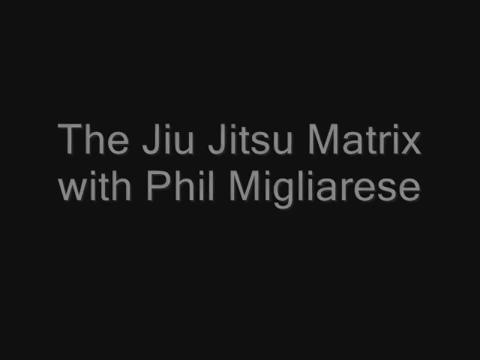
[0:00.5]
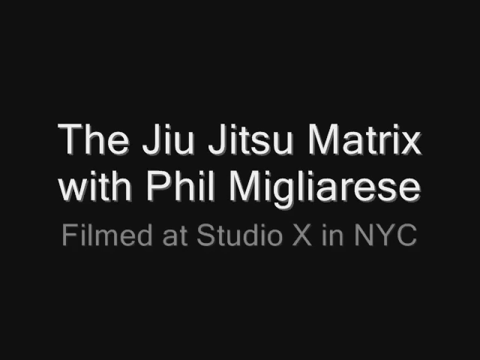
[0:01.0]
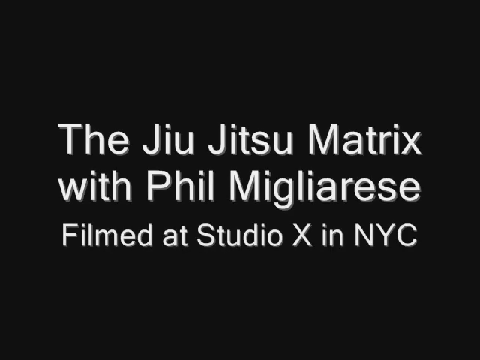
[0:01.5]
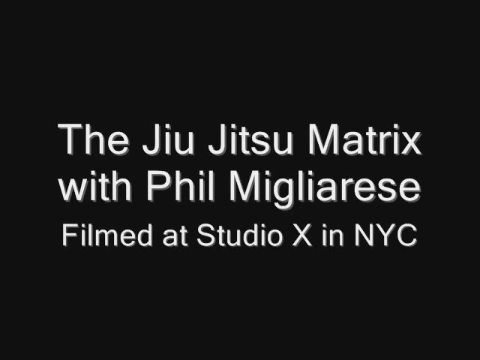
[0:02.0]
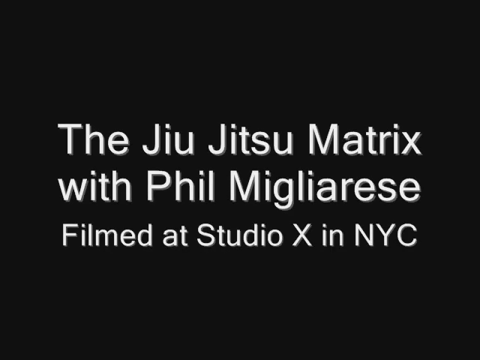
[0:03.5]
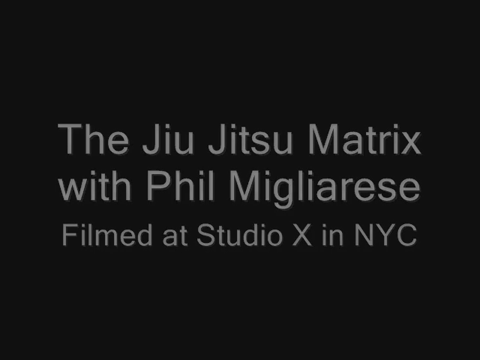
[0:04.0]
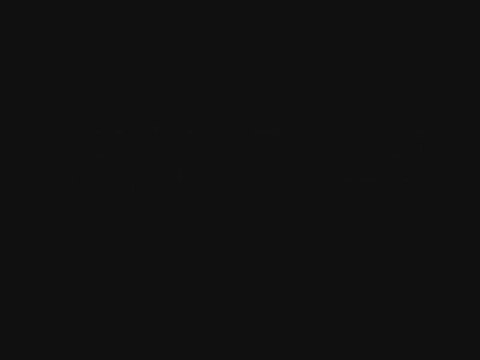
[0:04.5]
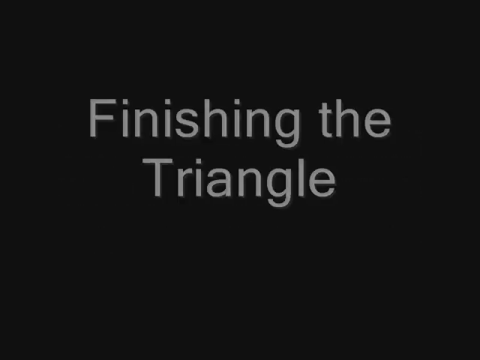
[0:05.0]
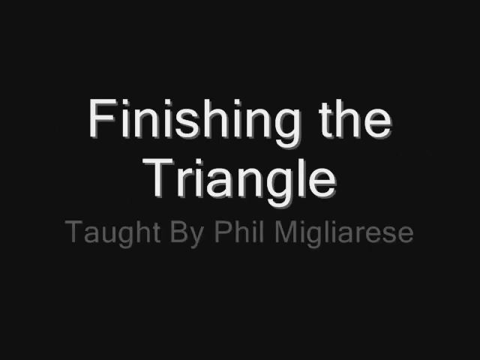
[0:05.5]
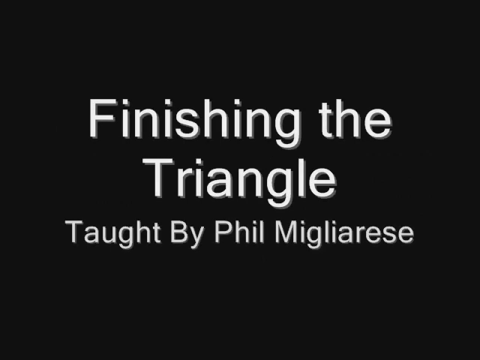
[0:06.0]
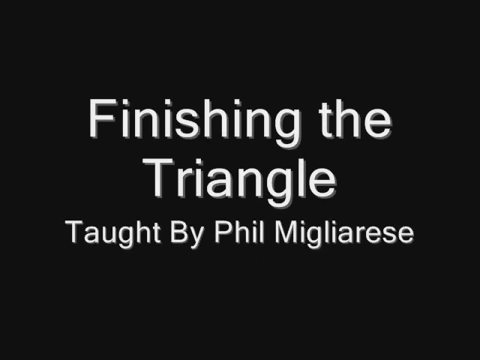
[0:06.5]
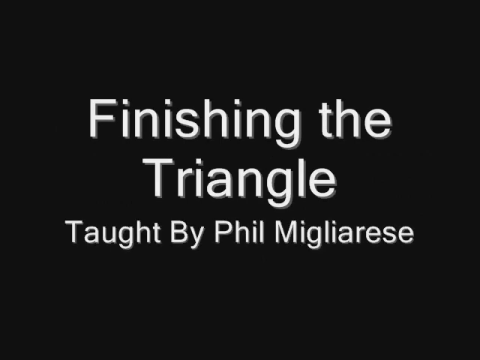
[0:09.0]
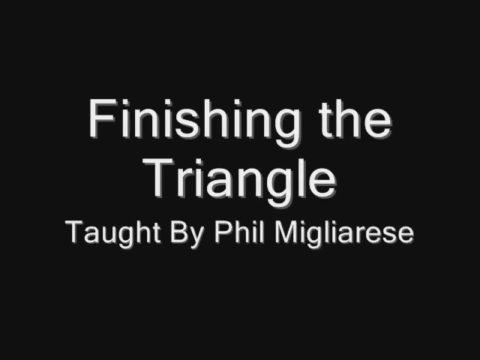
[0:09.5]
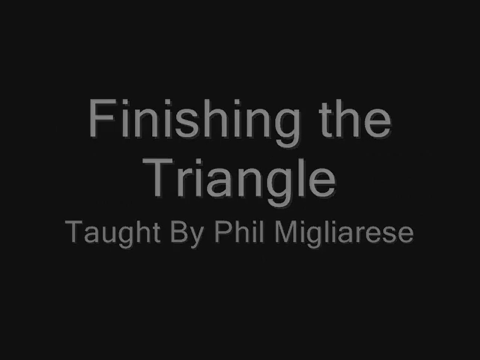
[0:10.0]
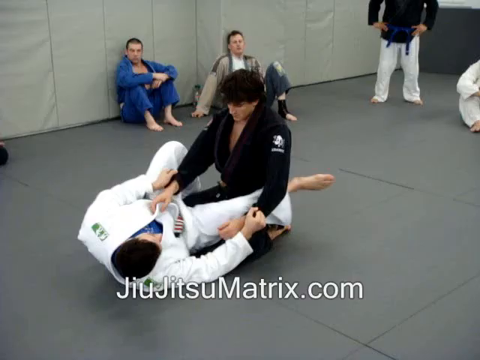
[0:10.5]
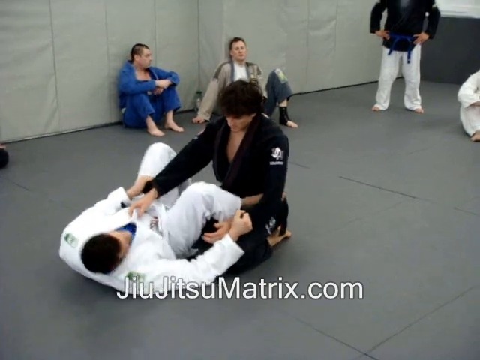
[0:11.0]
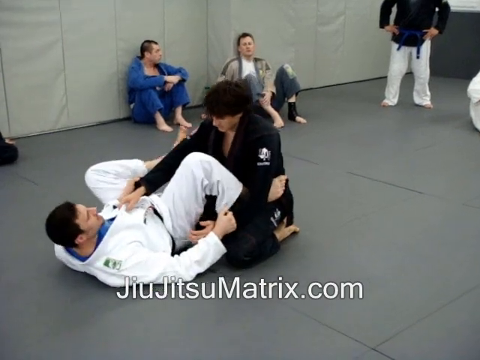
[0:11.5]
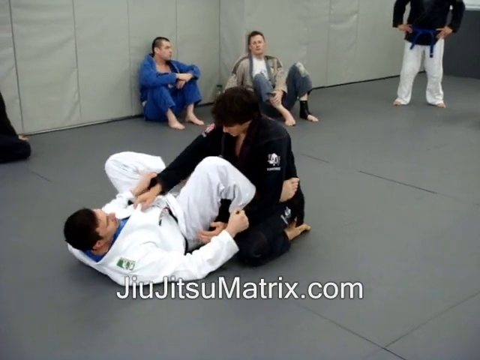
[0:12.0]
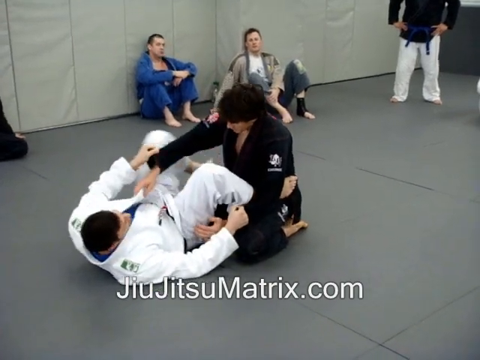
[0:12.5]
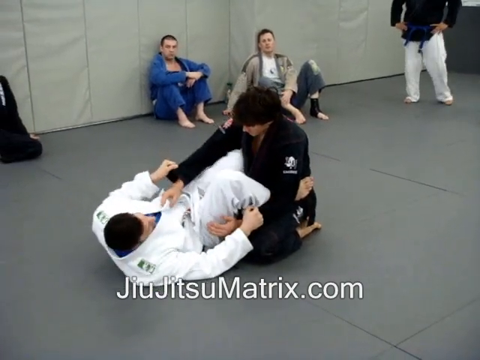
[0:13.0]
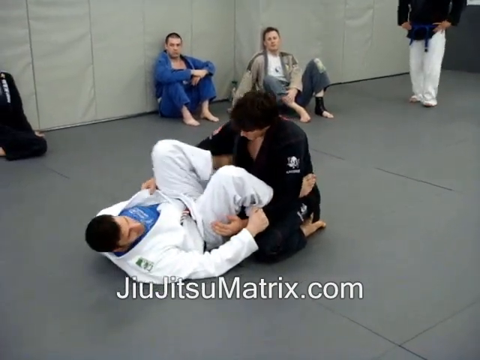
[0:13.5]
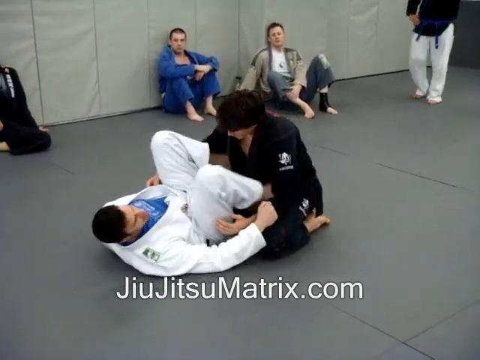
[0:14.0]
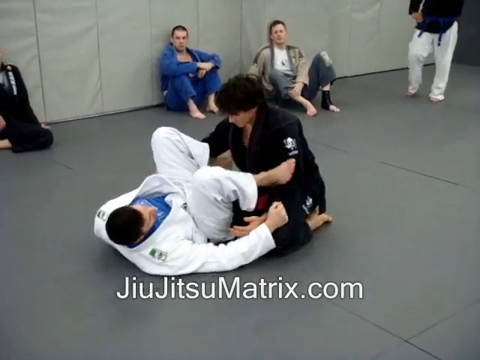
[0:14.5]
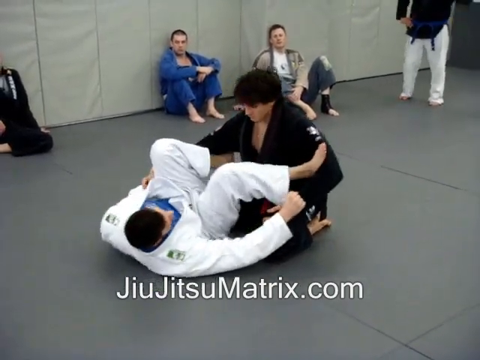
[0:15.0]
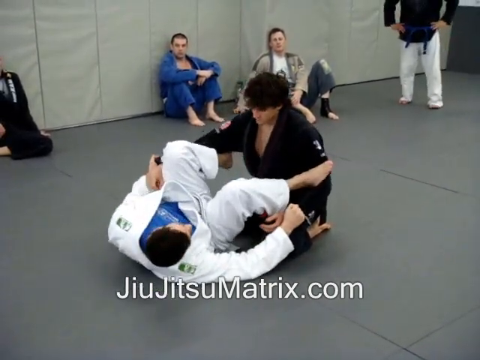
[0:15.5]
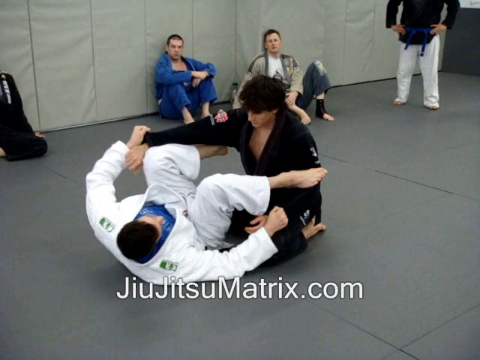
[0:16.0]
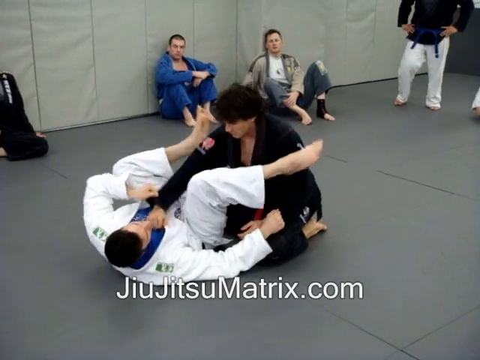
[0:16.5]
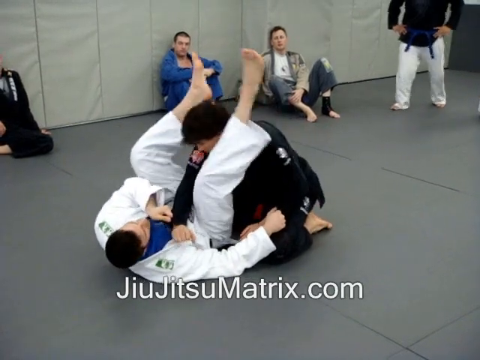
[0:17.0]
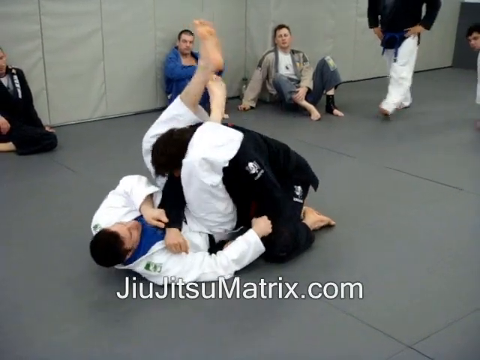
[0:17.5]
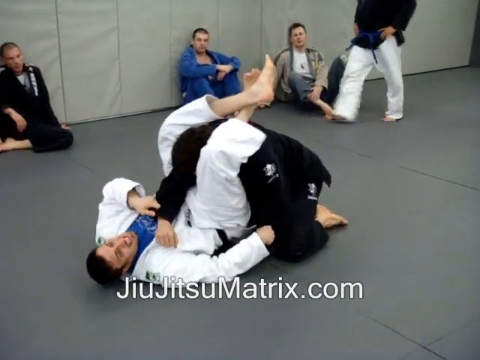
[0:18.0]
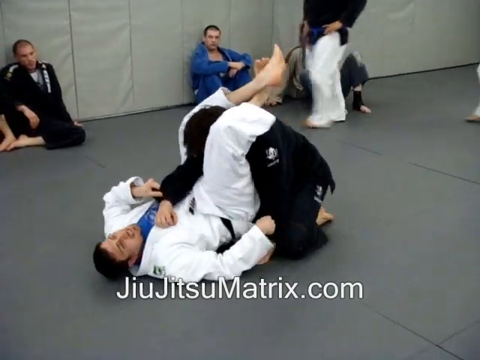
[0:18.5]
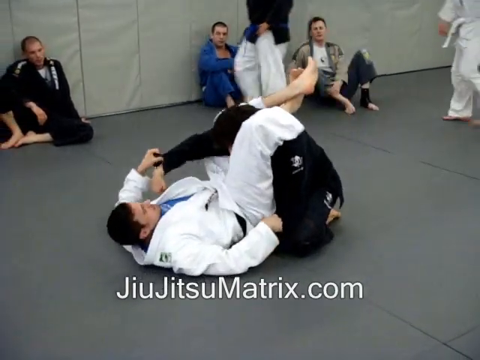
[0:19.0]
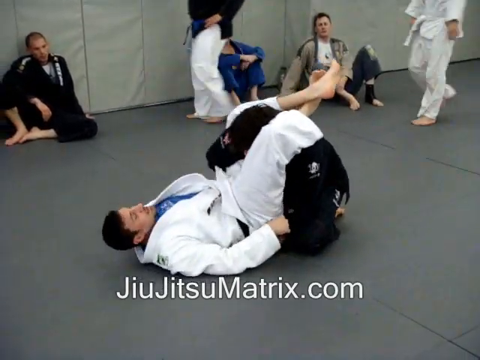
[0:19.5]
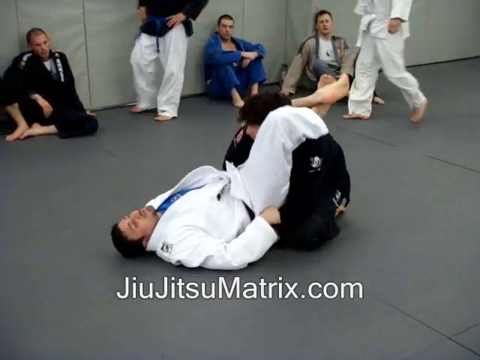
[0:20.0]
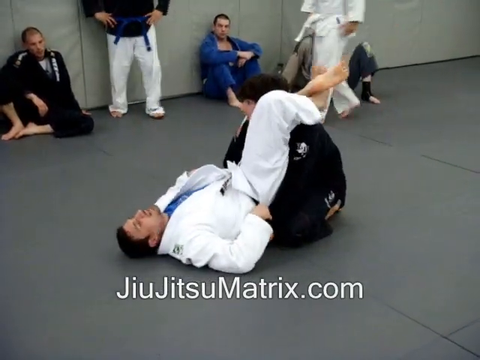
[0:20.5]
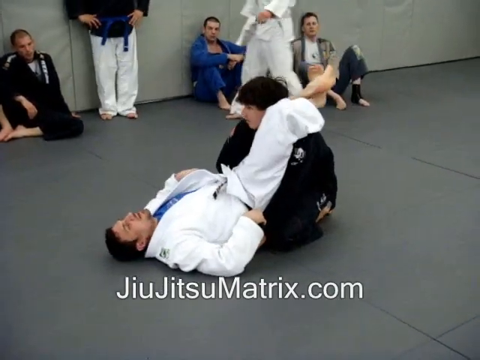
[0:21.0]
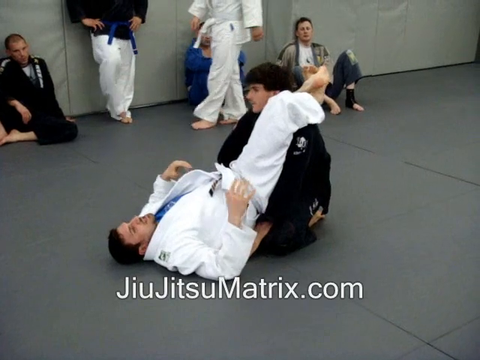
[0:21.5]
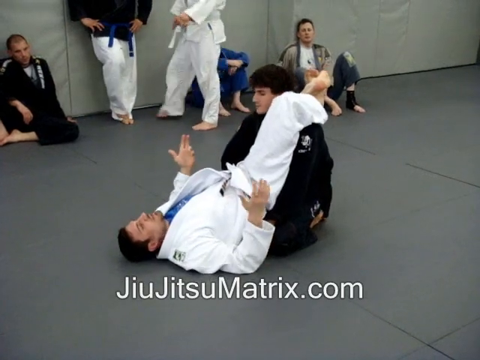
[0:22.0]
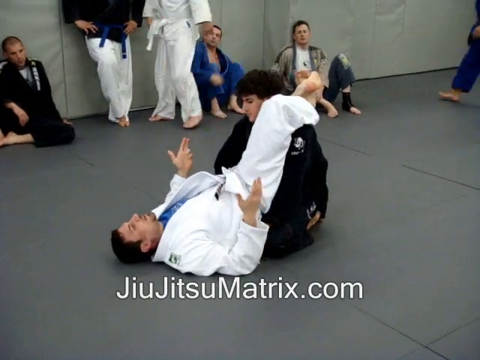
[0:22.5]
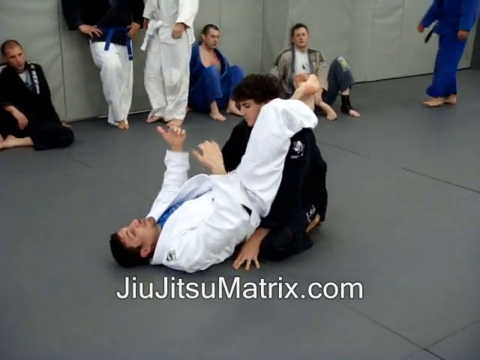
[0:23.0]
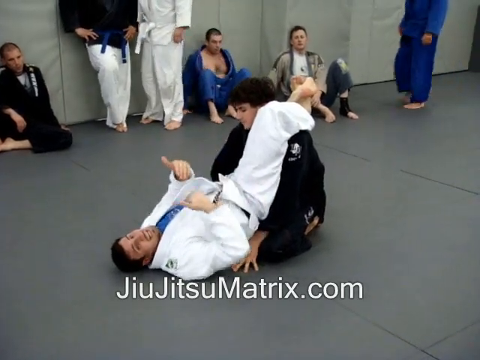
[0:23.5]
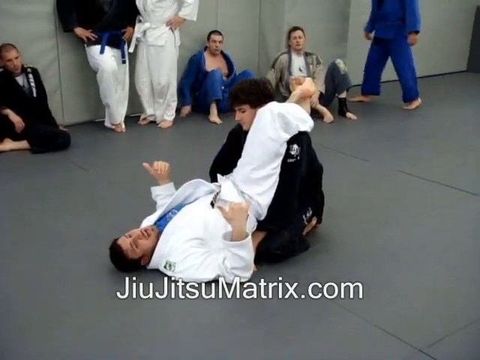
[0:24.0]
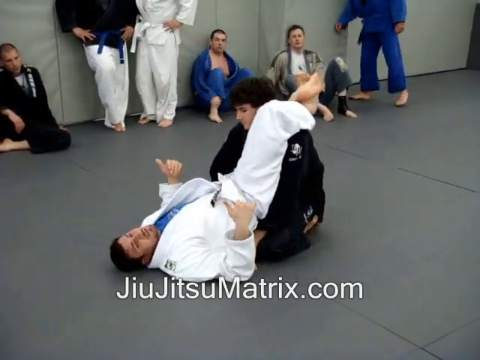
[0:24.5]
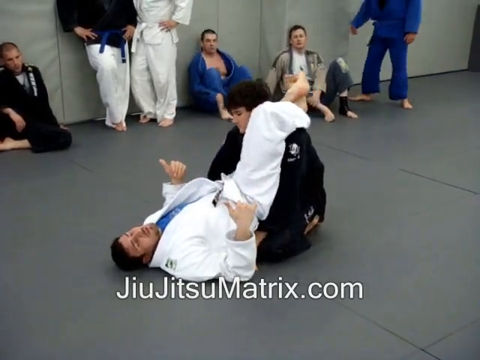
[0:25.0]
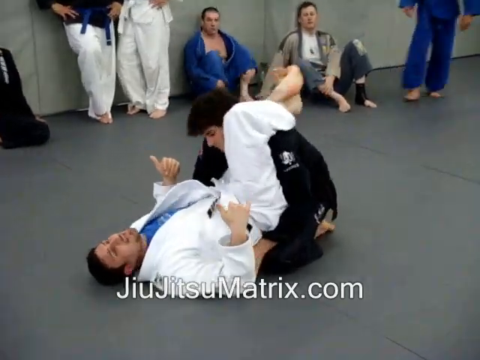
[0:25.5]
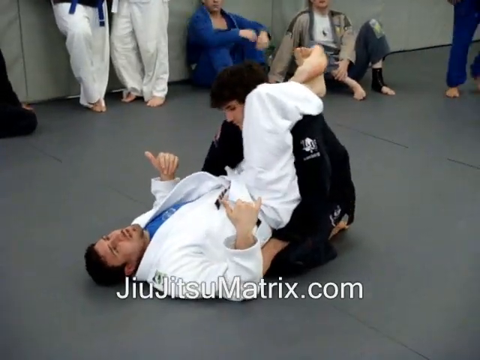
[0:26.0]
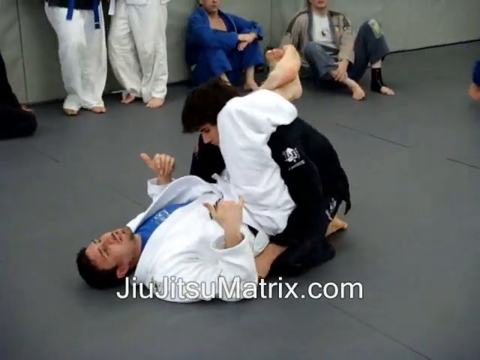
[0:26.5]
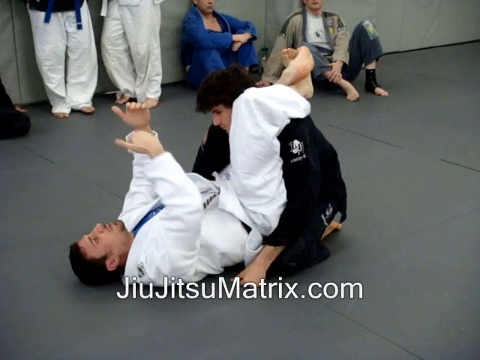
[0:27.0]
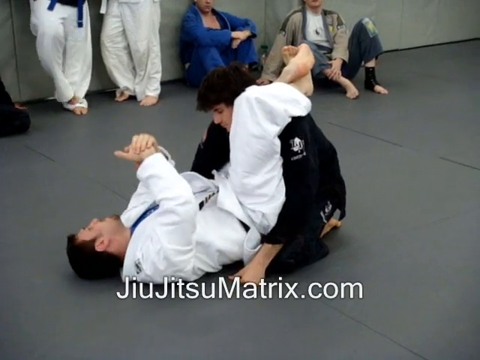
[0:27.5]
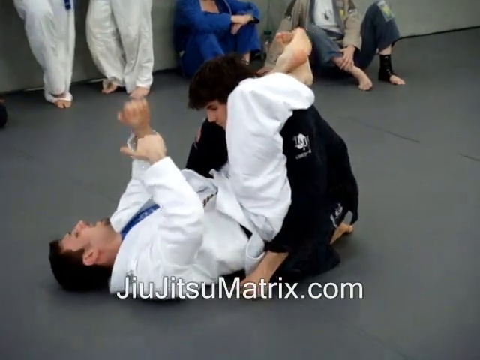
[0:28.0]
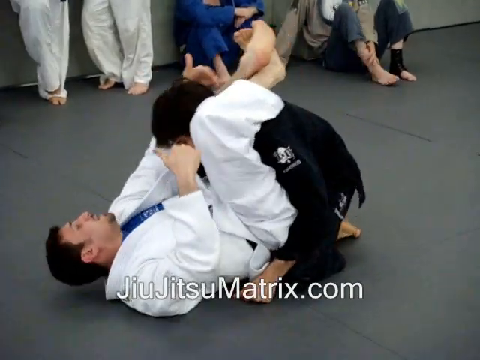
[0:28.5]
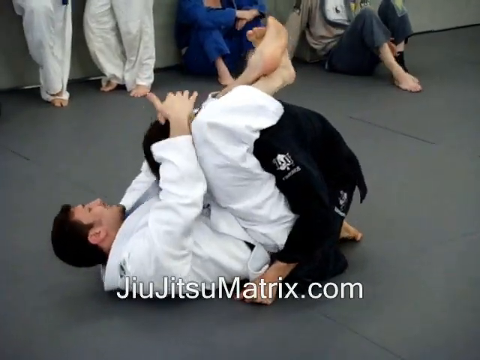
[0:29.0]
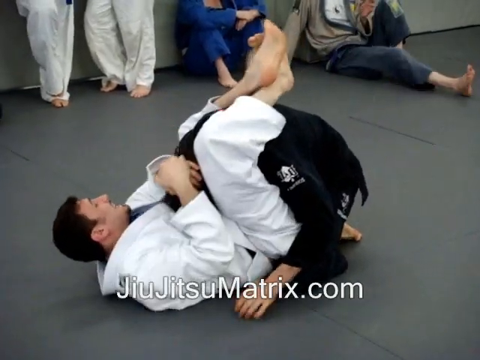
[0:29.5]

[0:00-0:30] On a black screen, white text enters reading "the Jiu-Jitsu Matrix with Phil Migliarese, filmed at Studio X in New York City." The text fades out and new white text enters: "finishing the triangle, taught by Phil Migliarese." That text also fades out, and the scene moves into a gray, completely padded room. There appear to be five men in the obvious focal point, plus two men barely visible off to the sides. Four of the men are sitting on the mat and one is standing with his hands on his hips. At the center are two men on the mat: one in white, who appears to be the instructor, and one in black, who appears to be the student. The student in black is sitting on his knees while the man in white lies on his back. The student has one hand around the man's shirt on his chest, and his left arm is sort of near his legs. The teacher in white holds the student's right wrist and left arm. One of the teacher's knees is behind the student's right arm; the other is on the inside near the student's chest, with his foot on the student's hip bone. The teacher seems to be demonstrating some kind of move. He brings his left knee up into the student's inner elbow, hooks his foot into the student's armpit, and moves his right leg into the student's inner elbow, pressing his foot against it, all while still holding the student's wrists. Using his left foot, he draws the student's right arm onto his chest and swings both legs up around the student's shoulders and onto his neck. He holds the student's right arm on his chest and uses his legs to pull the student toward him. He then moves the student's right arm under his legs onto his hip bone and begins using his arms to explain to the people watching. He appears to make a motion with his legs, probably indicating that he will pull the student down toward his chest and loop his arms behind the student's head. He then does so, pulling the student's head down toward his chest.